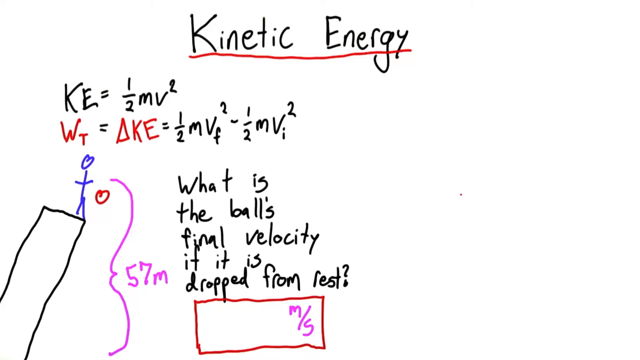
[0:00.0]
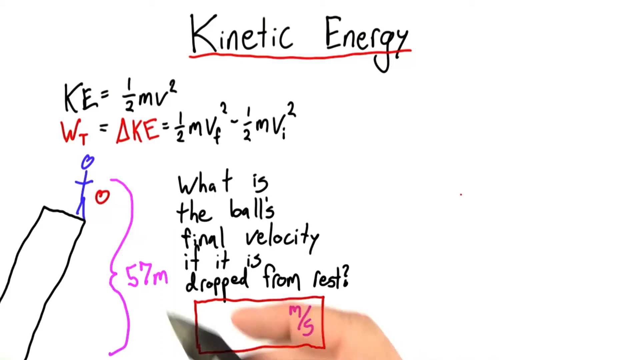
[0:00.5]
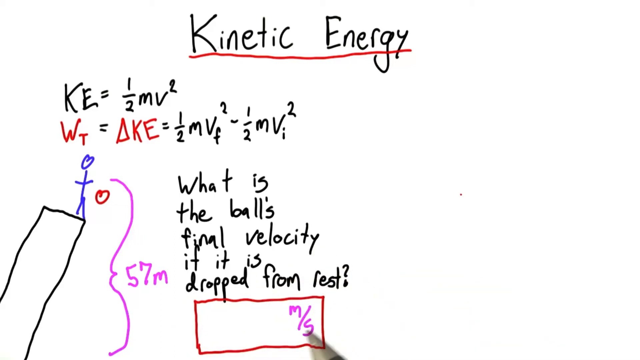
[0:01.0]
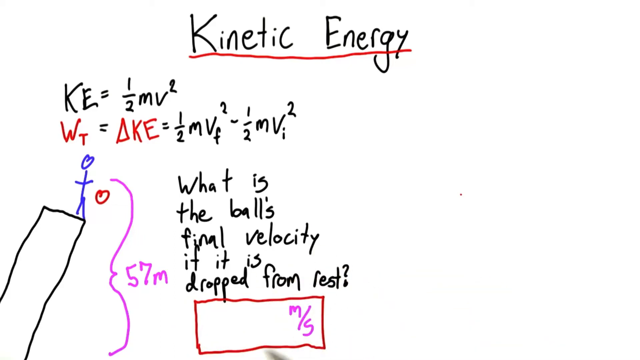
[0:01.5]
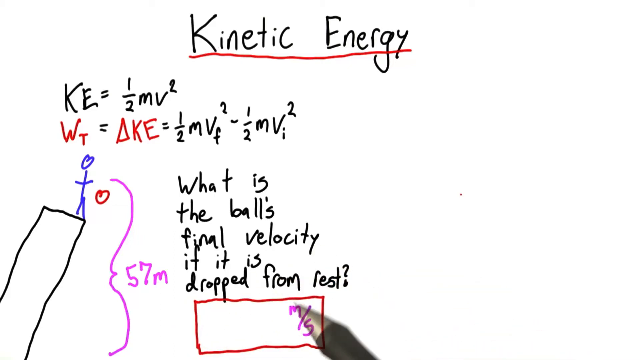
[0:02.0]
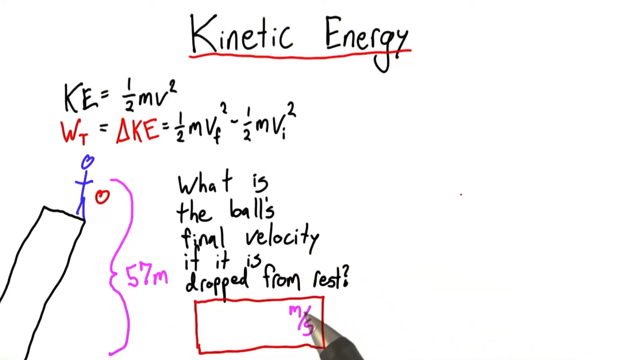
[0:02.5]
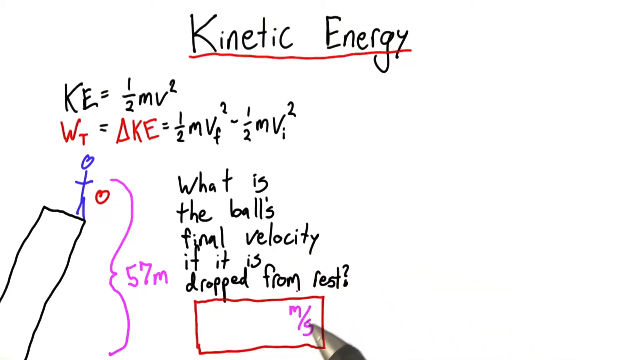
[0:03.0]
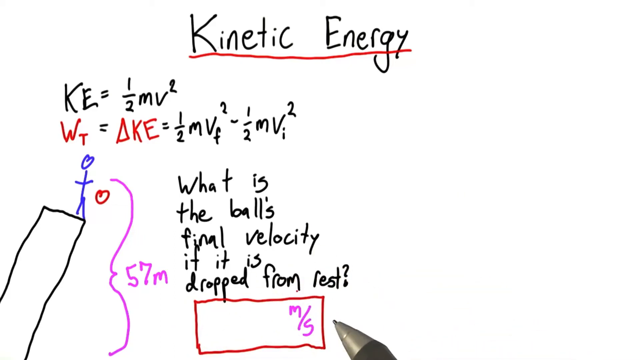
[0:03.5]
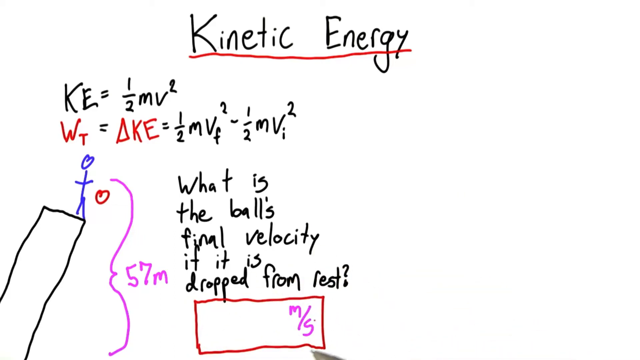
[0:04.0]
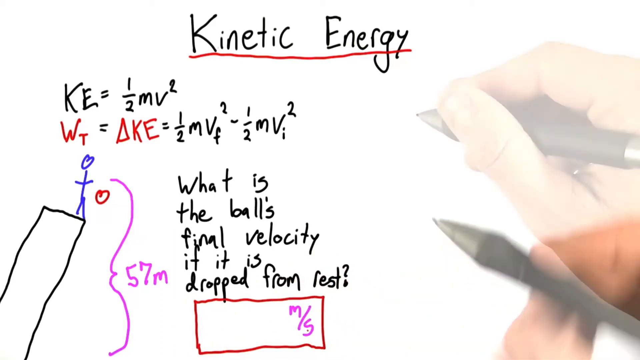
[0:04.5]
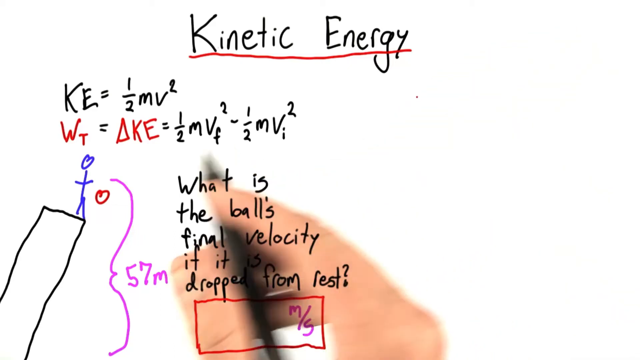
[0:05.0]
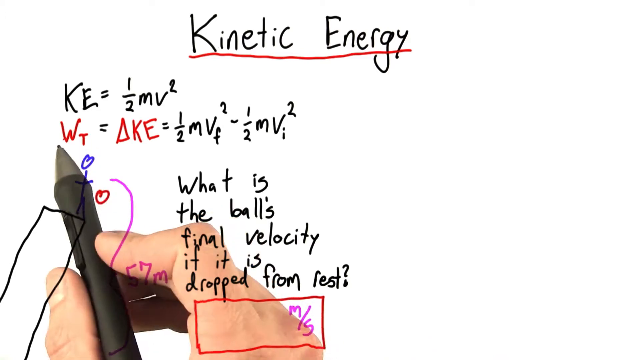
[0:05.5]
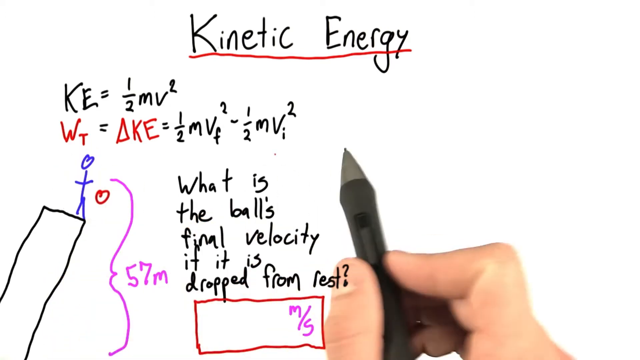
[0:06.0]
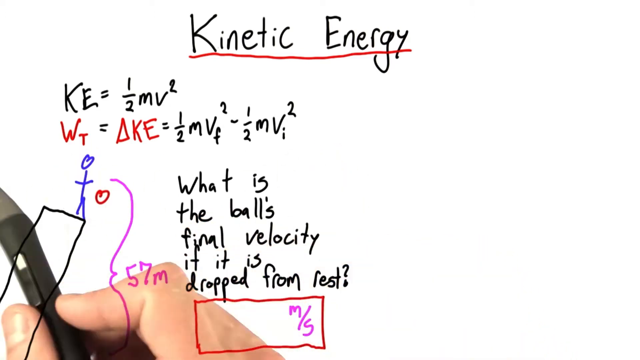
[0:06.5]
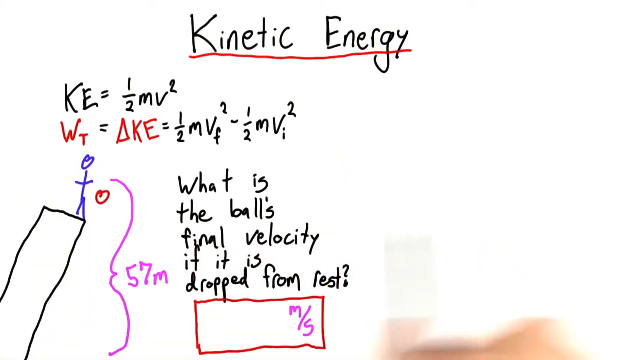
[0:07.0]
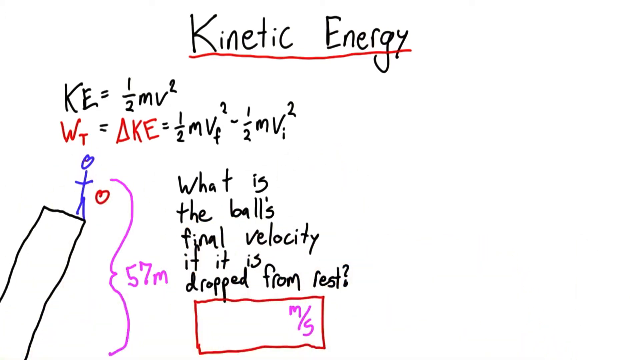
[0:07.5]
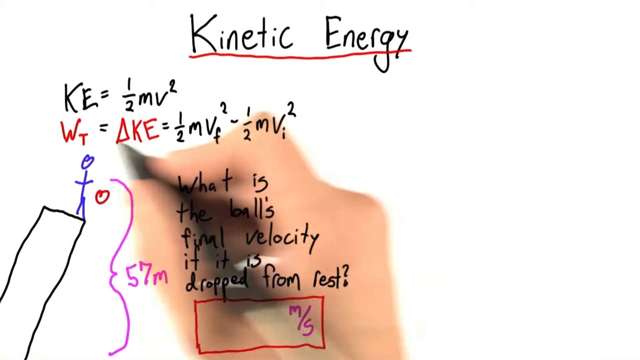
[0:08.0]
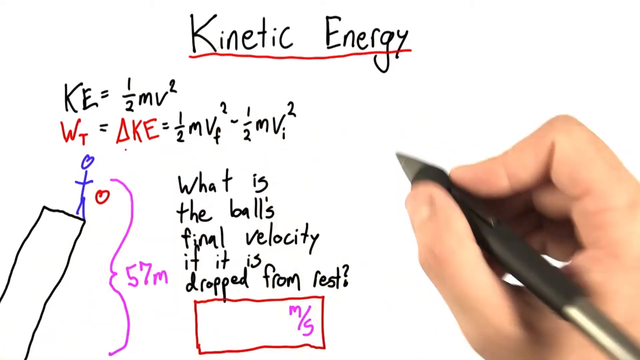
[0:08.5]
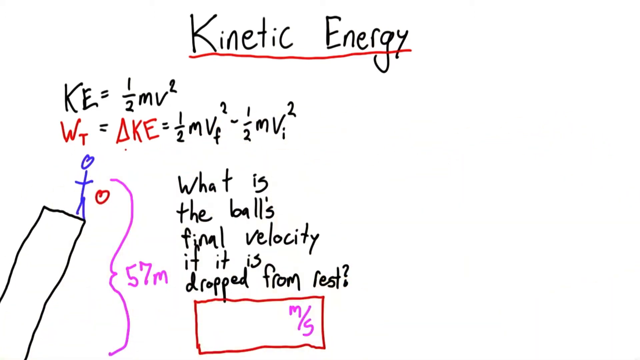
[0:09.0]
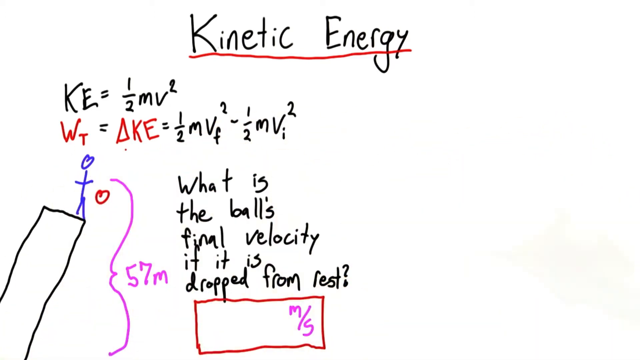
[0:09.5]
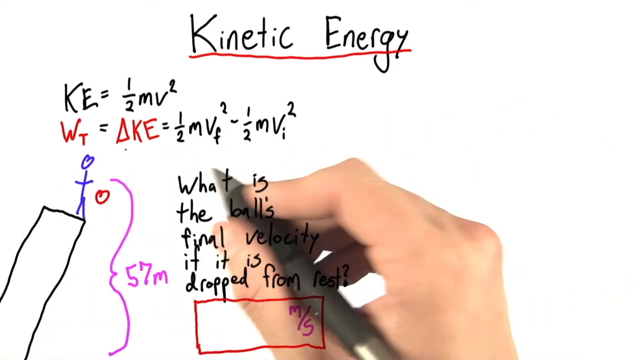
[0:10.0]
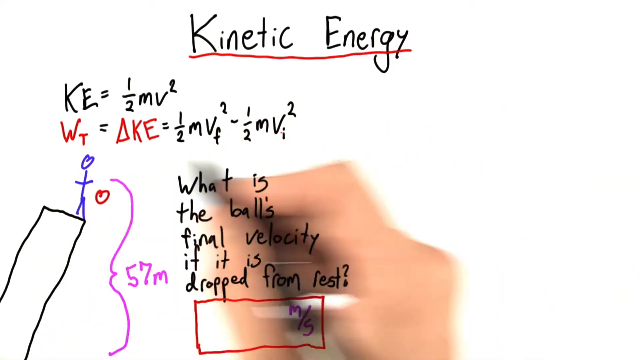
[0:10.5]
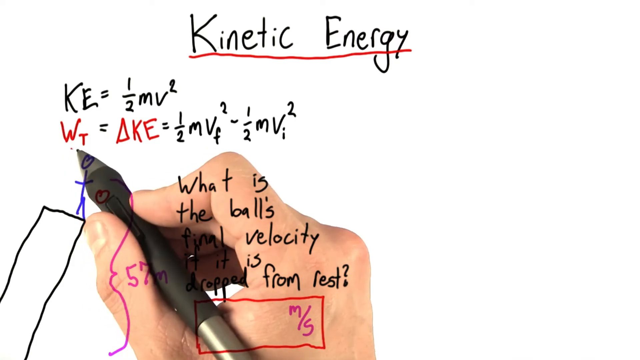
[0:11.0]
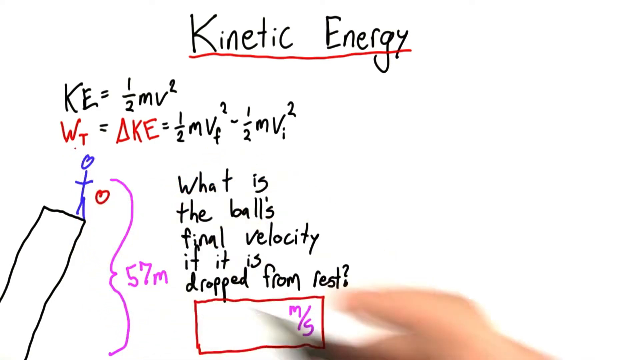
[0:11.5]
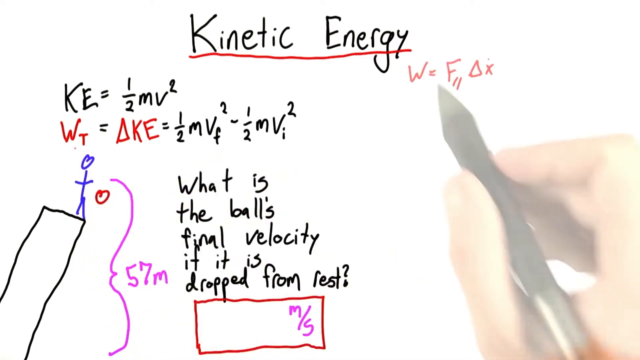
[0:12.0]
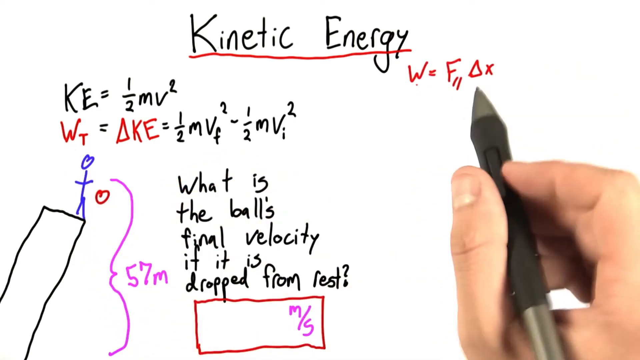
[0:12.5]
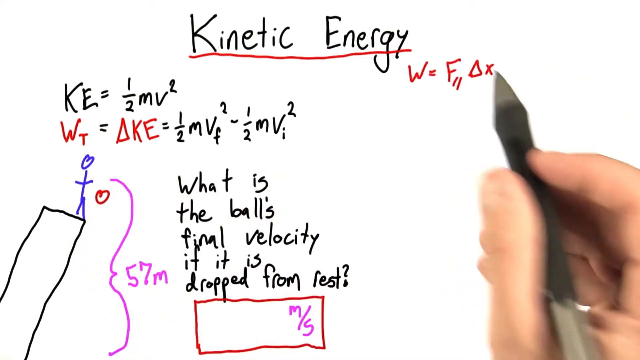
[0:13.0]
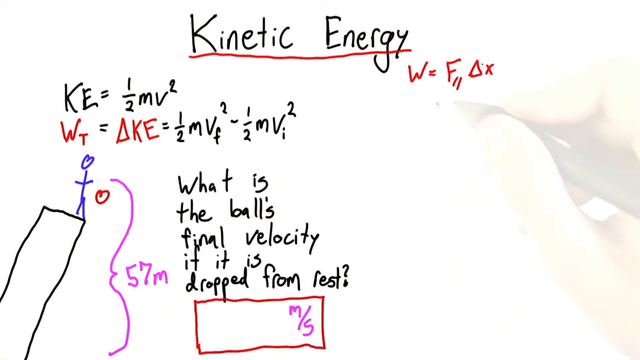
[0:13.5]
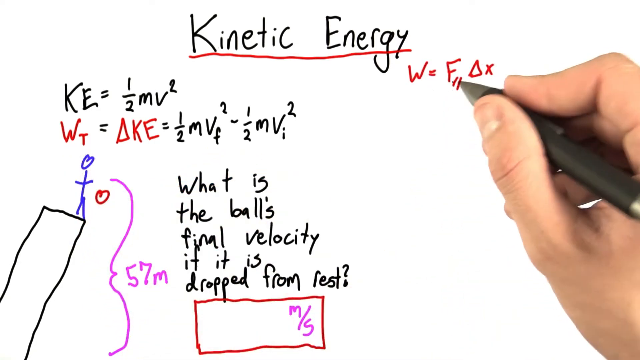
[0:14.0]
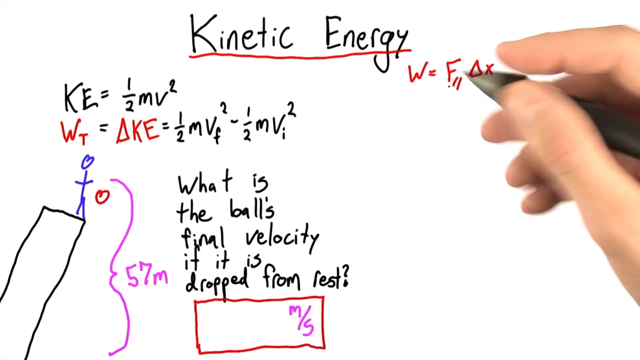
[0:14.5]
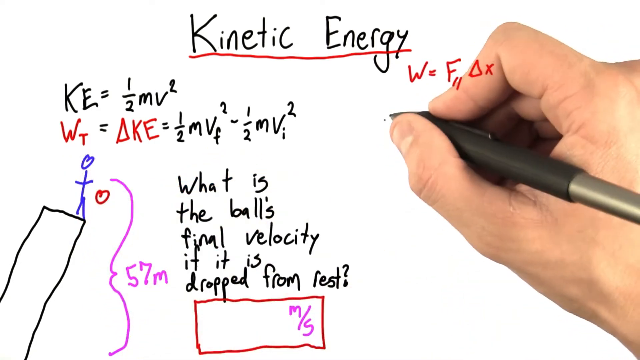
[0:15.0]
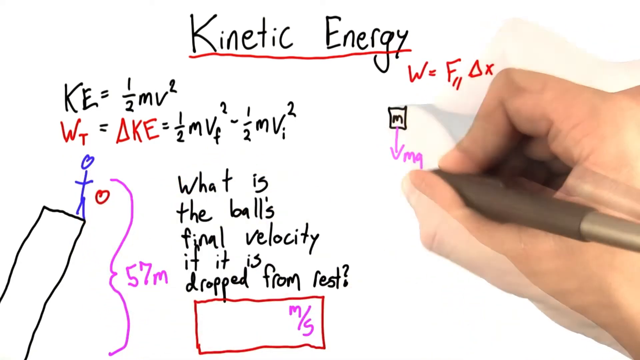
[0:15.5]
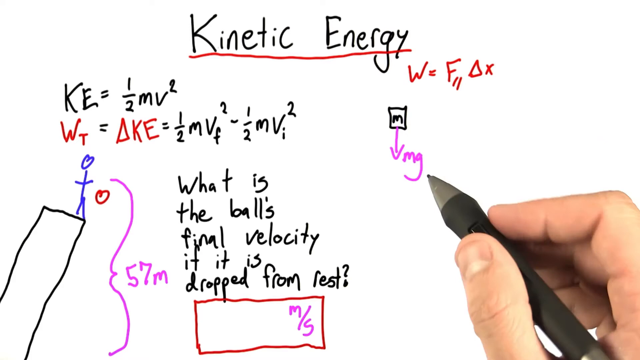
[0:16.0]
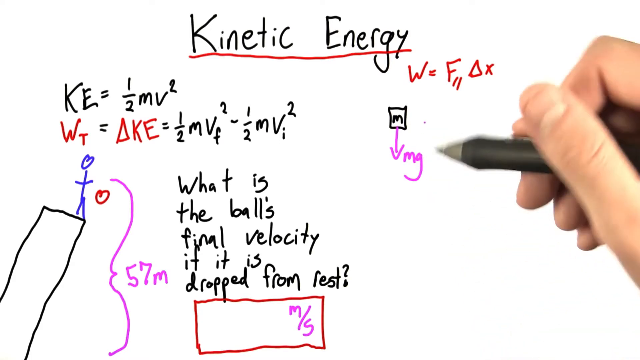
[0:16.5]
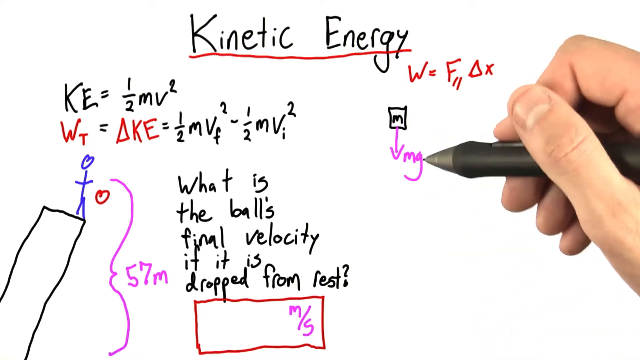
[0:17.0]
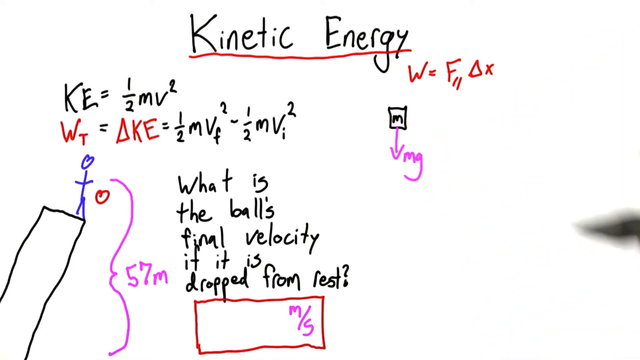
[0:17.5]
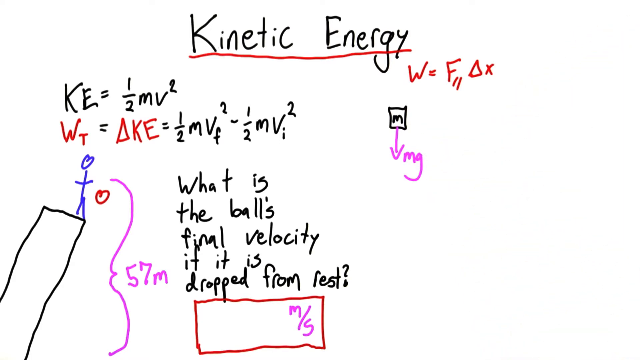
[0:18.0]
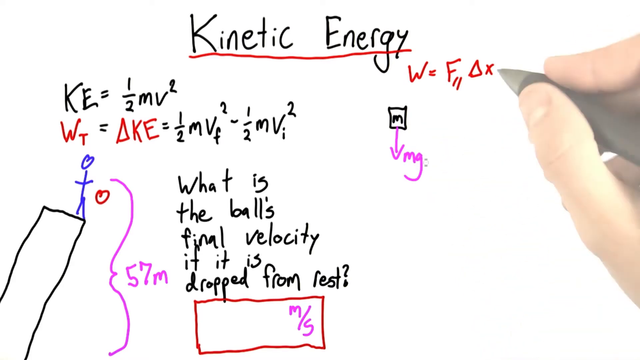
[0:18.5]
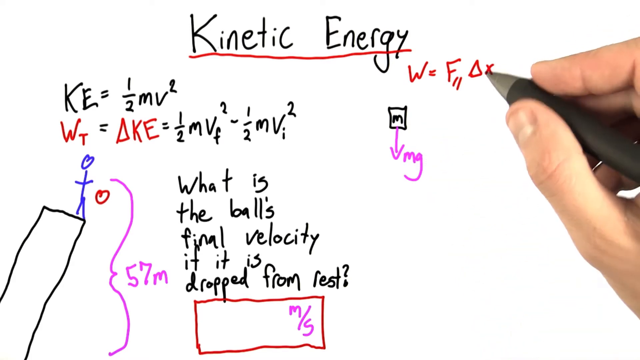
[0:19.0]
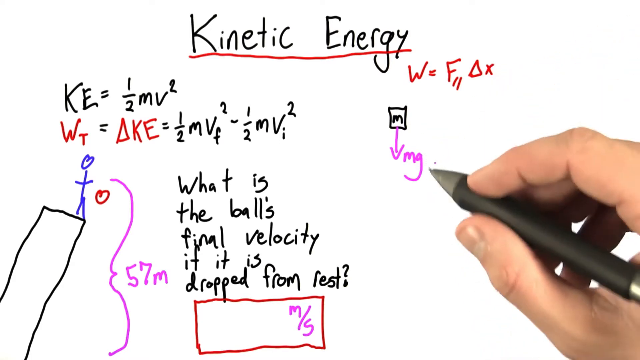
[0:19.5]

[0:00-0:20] The screen appears to be a white blackboard with text that looks like handwritten marker. At the top it says "Kinetic Energy" in black with a red underline that isn't perfectly straight. Below that, to the left, is an equation: "KE = 1/2 mv squared". Another equation follows that includes some red text. In the bottom left is kind of a tower, really just a rectangle, tilted to the right, with a blue stick figure on its edge and a red ball, not perfectly drawn, being dropped. An indicator shows it is 57m from the ground. To the right of that, text says "What is the ball's final velocity if it is dropped from rest?" A hand then appears holding what looks like a black pen with a narrow silver tip. It jerks around right and left over the image without actually writing anything, and it looks like it is below the text. In the upper right, under the 'y' in "energy", red text appears: "W = f Δx", with a subscript next to the f that is possibly an 11. The pen still isn't really writing. Beneath that is kind of a black square and a purple arrow pointing down. This material seems to just appear as the pen moves close to it.